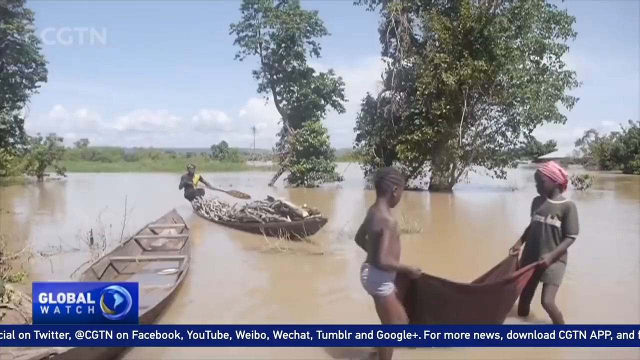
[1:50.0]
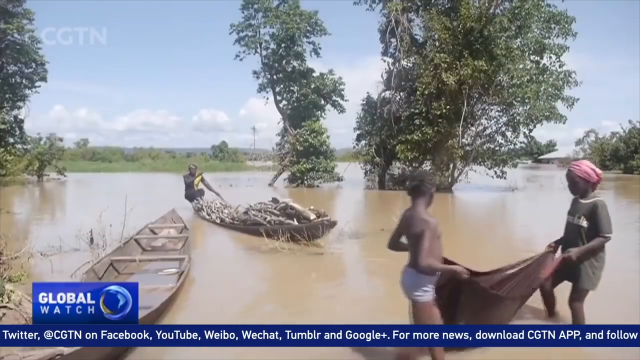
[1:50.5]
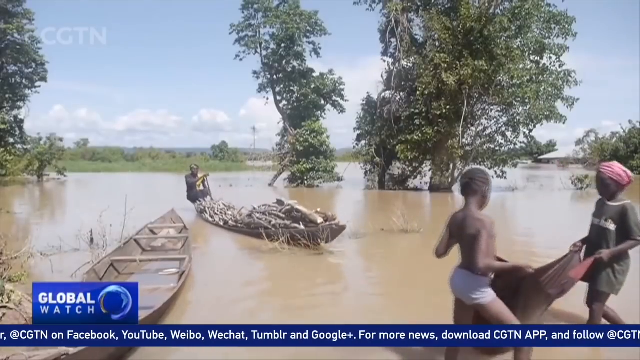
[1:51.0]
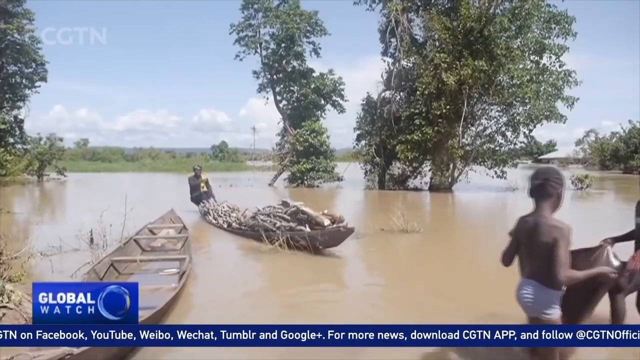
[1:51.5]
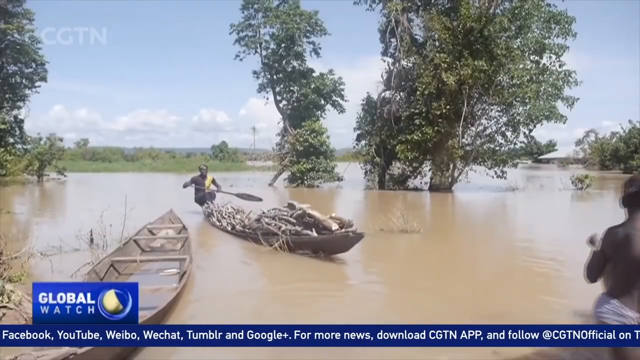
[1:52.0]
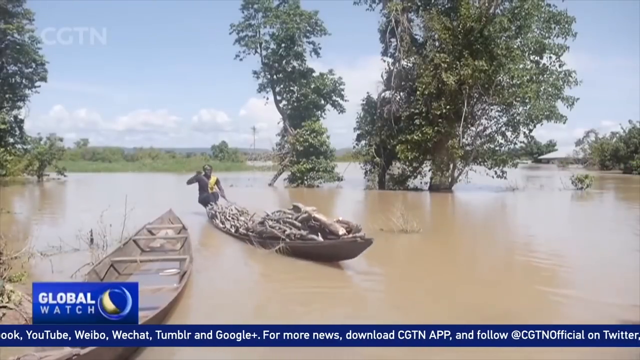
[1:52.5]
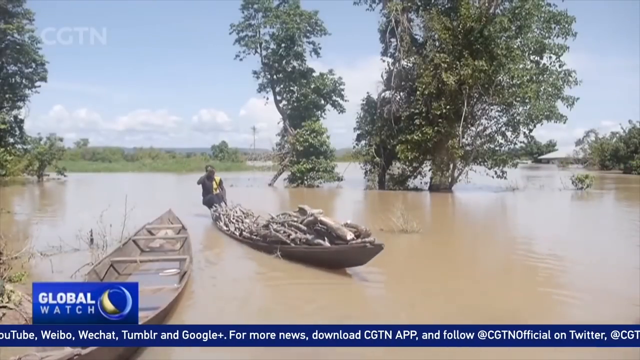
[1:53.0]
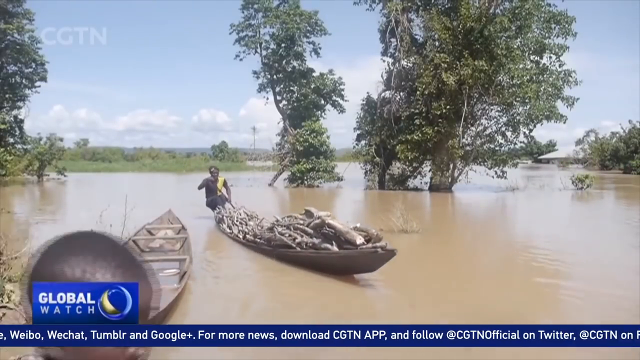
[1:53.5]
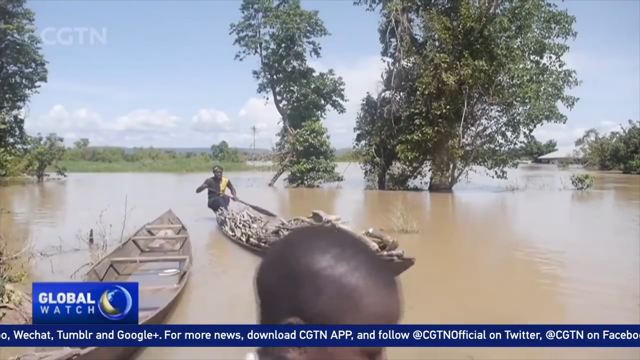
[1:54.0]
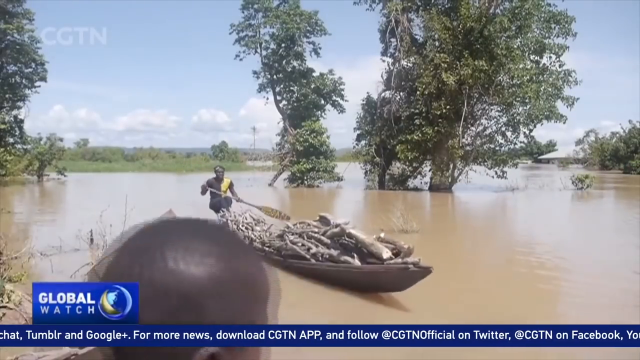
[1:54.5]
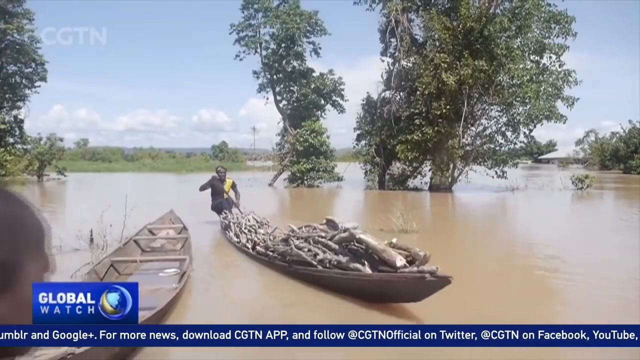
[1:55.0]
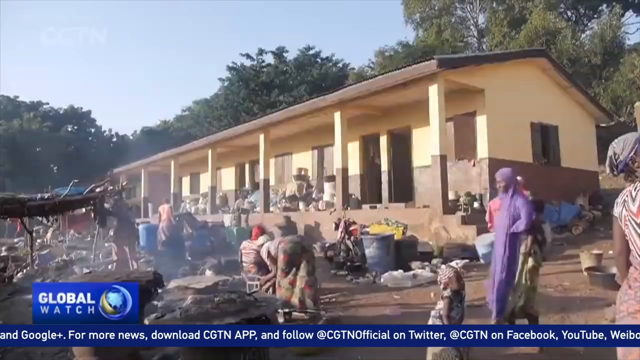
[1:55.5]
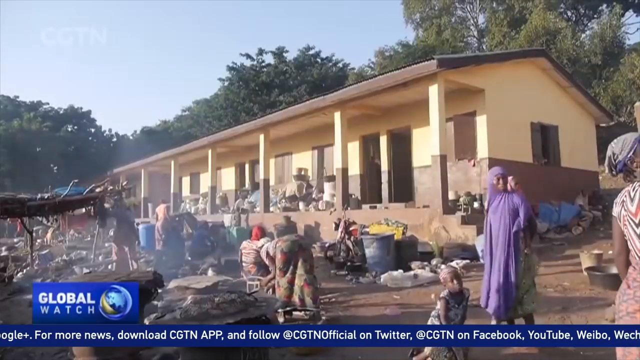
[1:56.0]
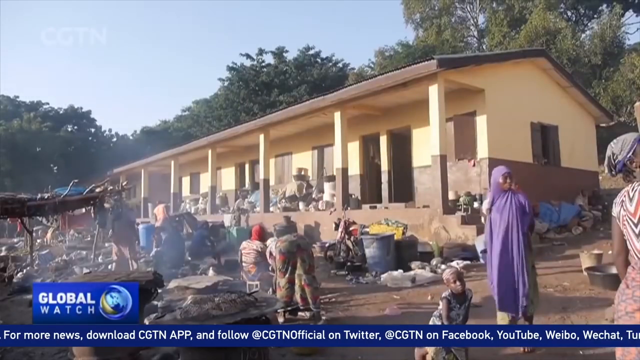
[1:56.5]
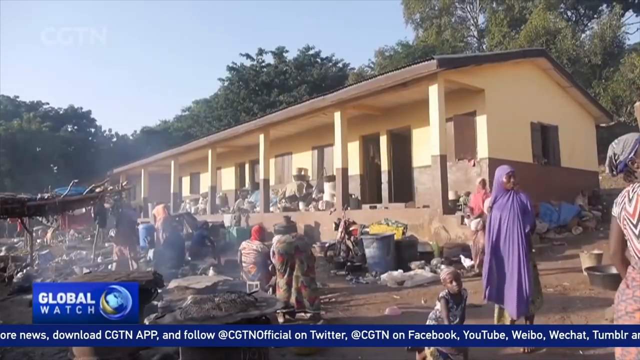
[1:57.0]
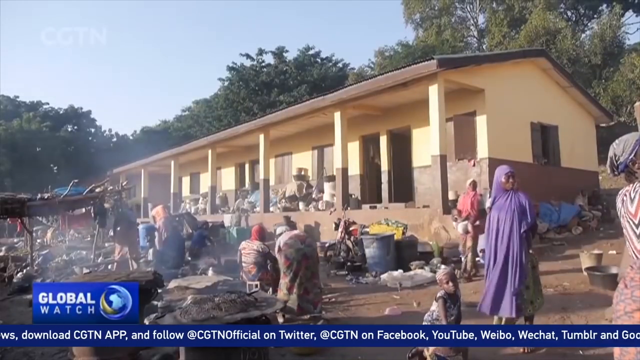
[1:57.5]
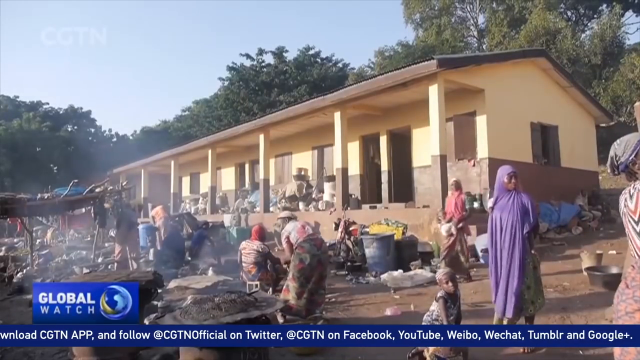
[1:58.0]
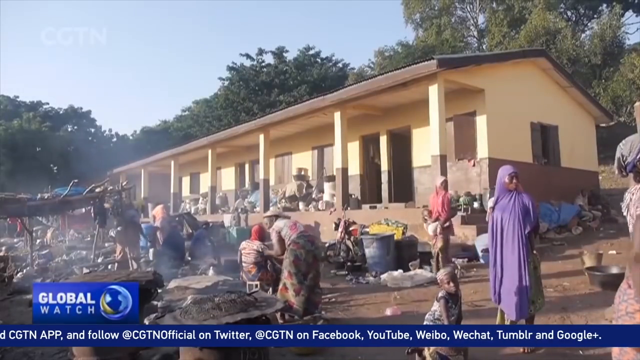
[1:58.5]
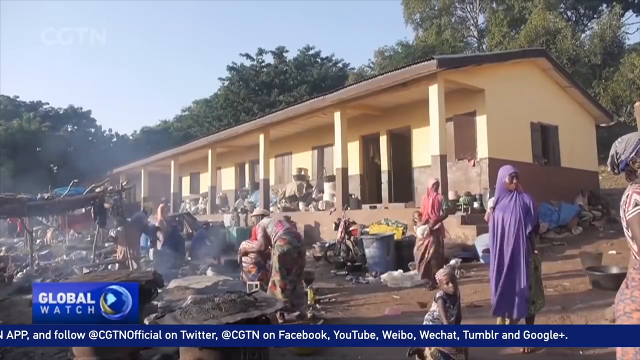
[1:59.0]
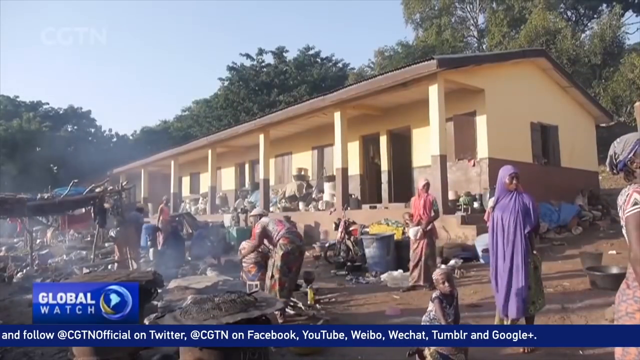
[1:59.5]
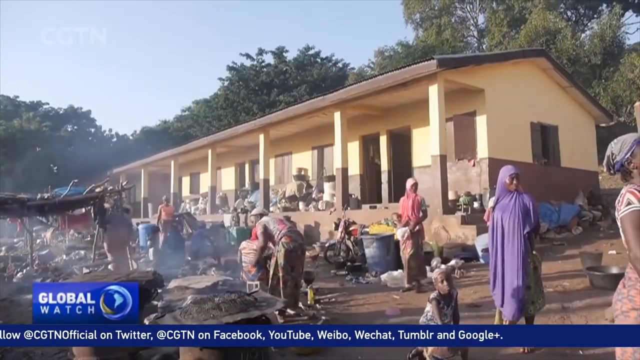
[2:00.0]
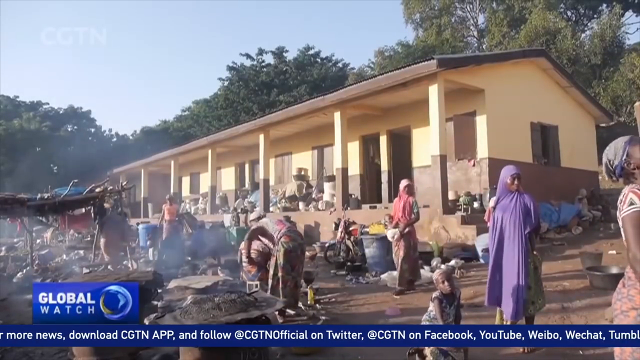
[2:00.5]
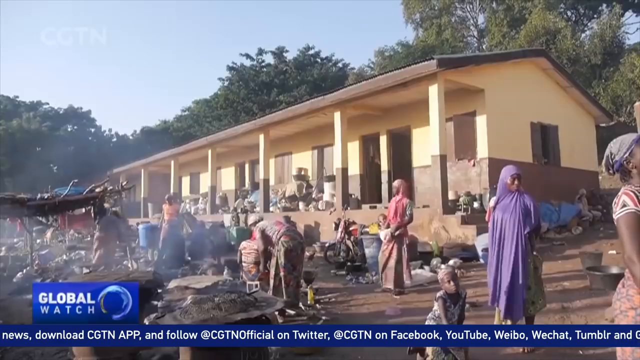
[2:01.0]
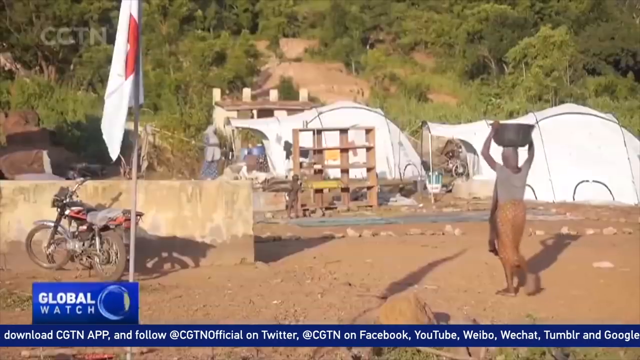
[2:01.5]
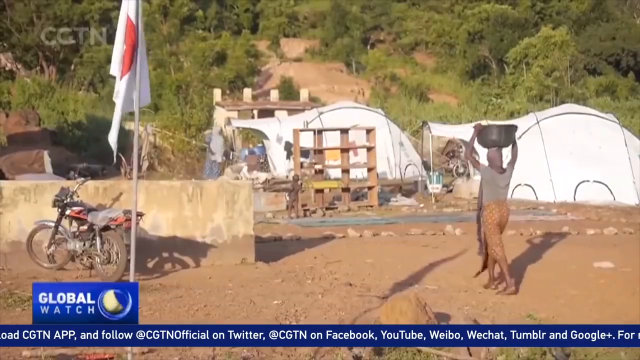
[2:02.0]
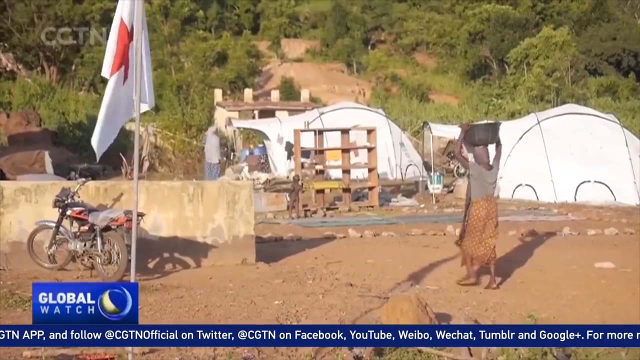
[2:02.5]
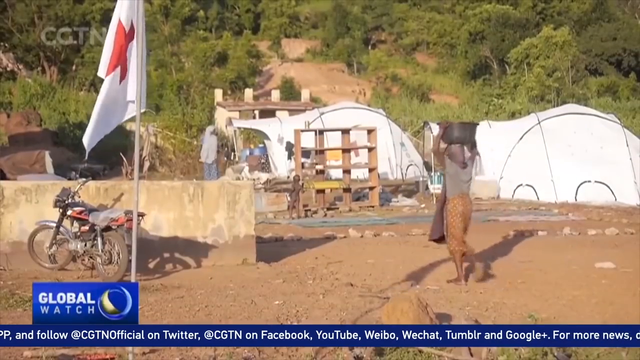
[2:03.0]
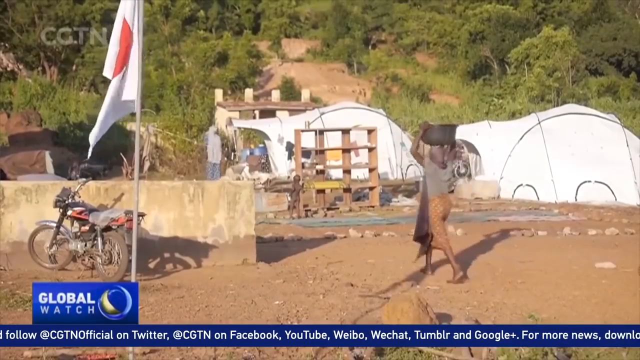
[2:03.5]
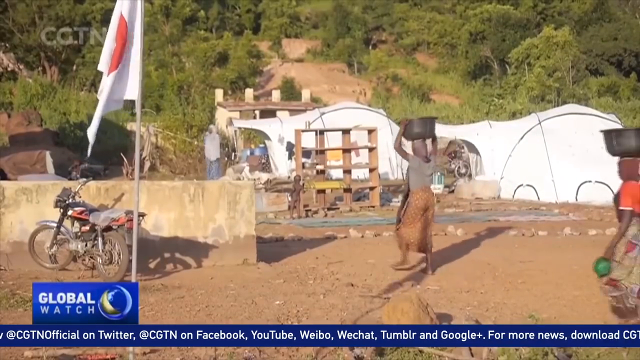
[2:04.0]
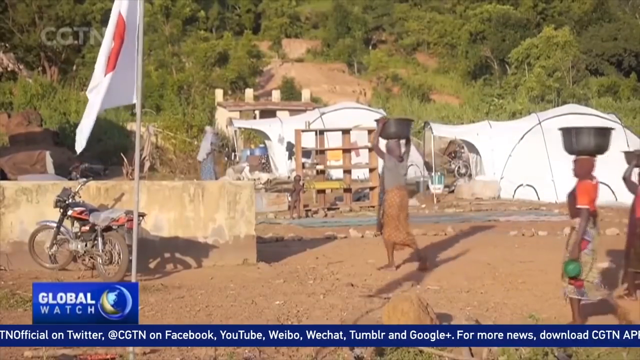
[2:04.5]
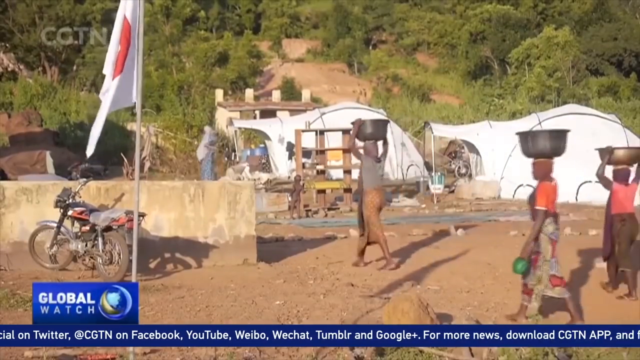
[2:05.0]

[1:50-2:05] Two girls stand at the edge of what seems like a river but is floodwater, carrying a cloth, as a man pulls his canoe over to the edge, bringing in wood. On the other side of the water is a camp housing women and children. Women cook on a fire built on the ground; they have cloths wrapped around their waists and headscarves covering their heads, some dressed in Muslim clothes and others simply wearing headscarves. There are children and chickens, and people move around, both men and women but mostly women and children, outside a building that looks like a school.